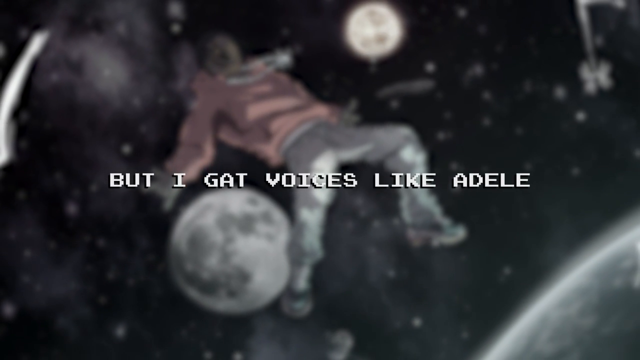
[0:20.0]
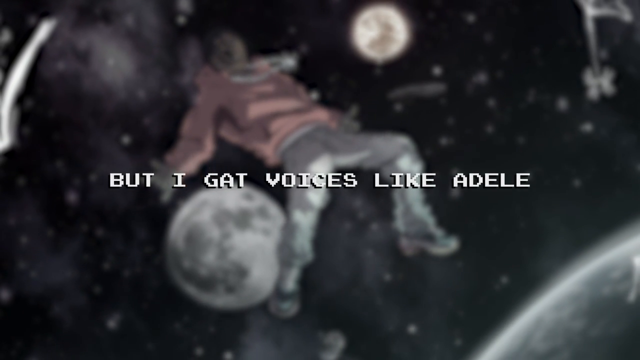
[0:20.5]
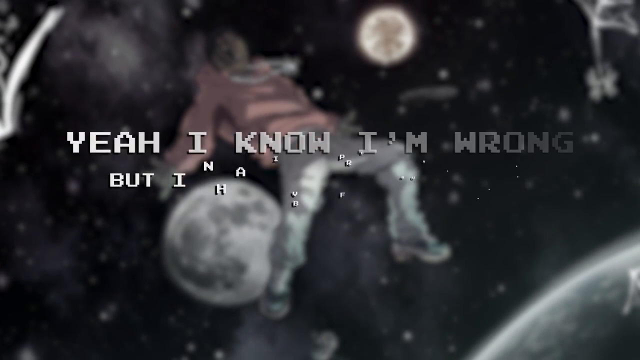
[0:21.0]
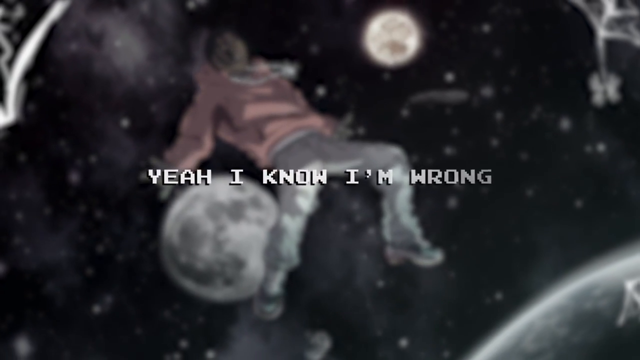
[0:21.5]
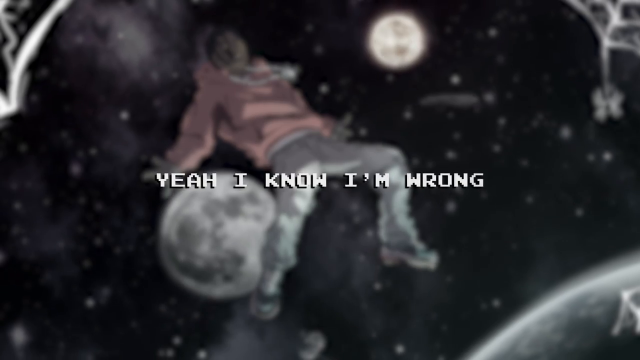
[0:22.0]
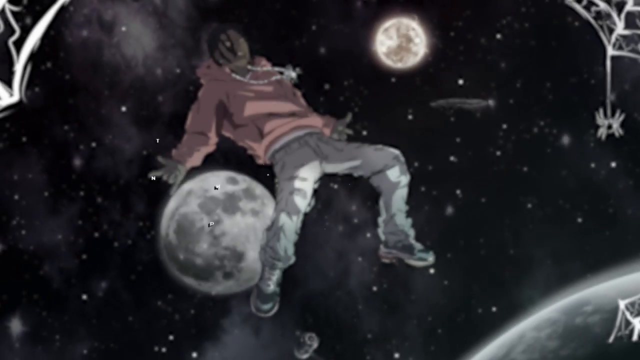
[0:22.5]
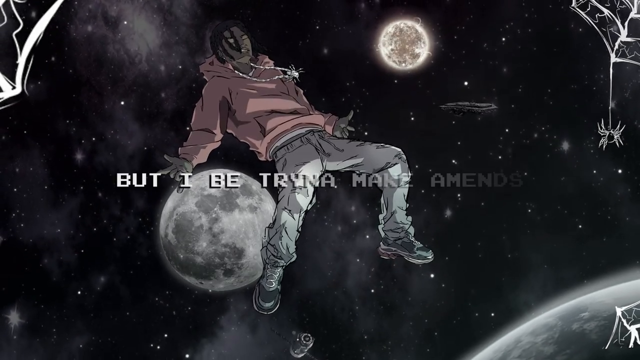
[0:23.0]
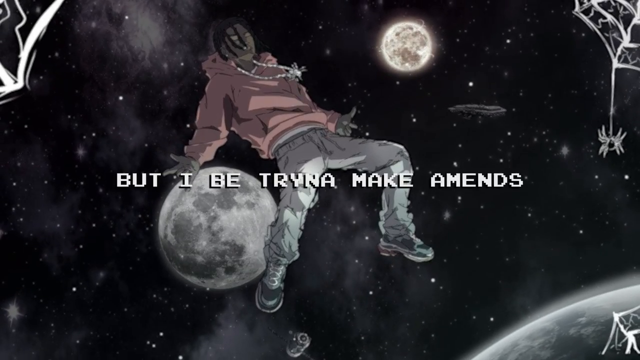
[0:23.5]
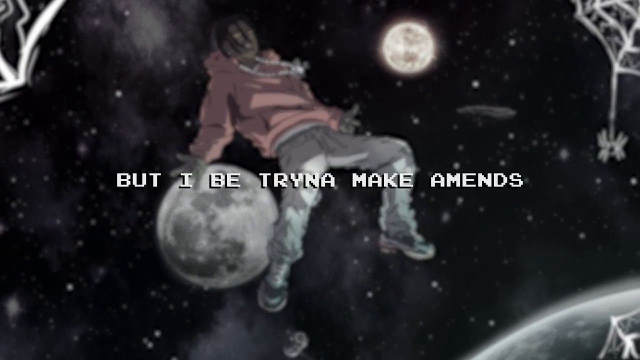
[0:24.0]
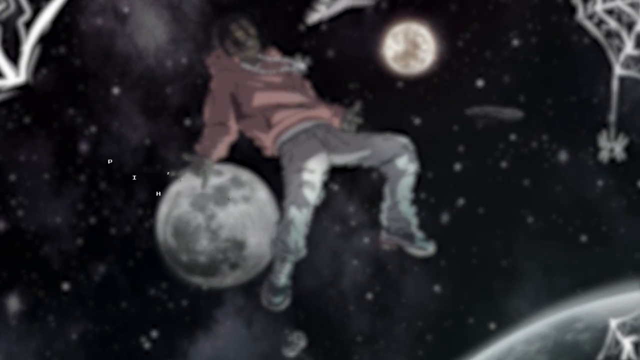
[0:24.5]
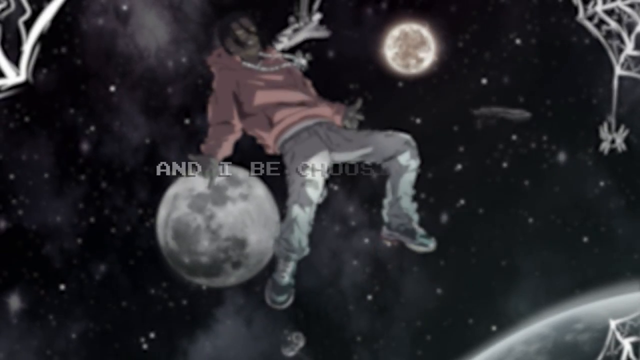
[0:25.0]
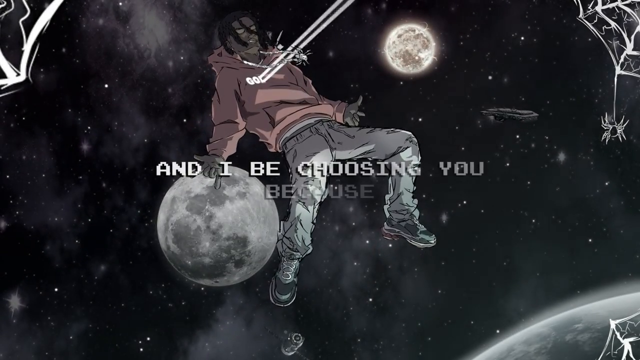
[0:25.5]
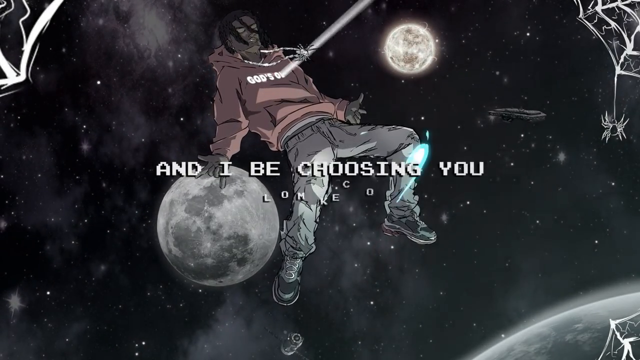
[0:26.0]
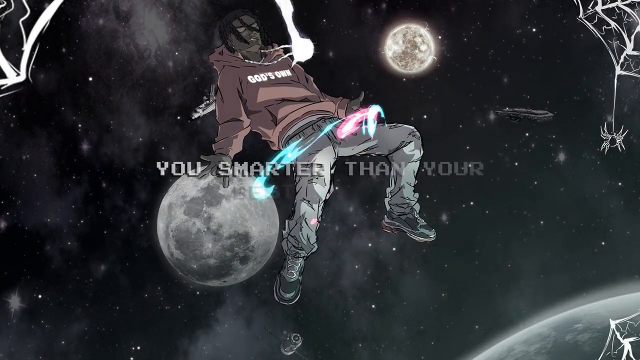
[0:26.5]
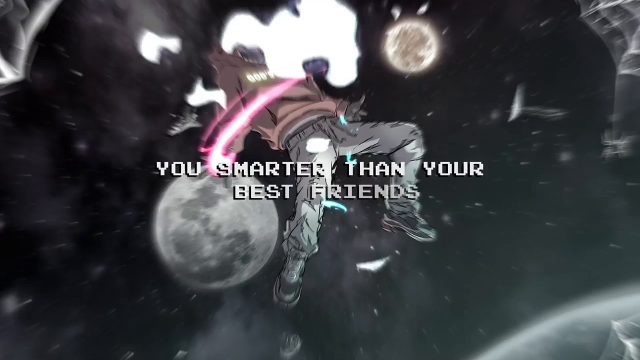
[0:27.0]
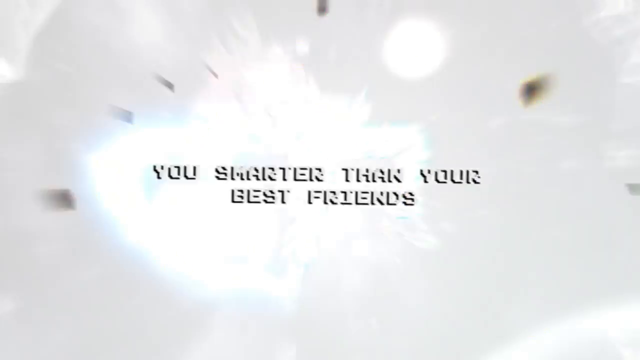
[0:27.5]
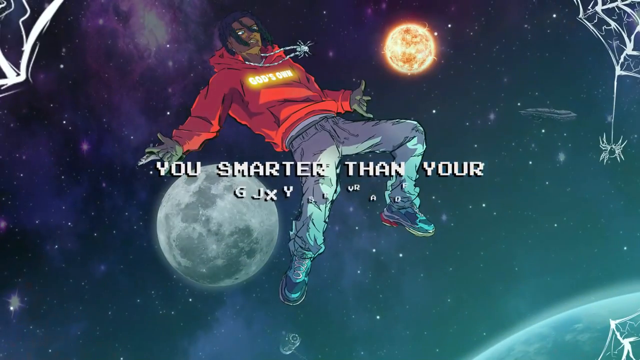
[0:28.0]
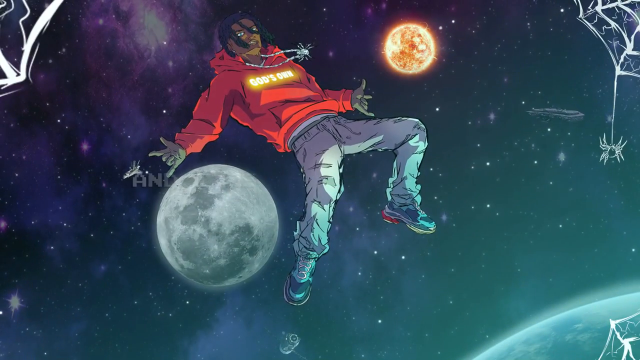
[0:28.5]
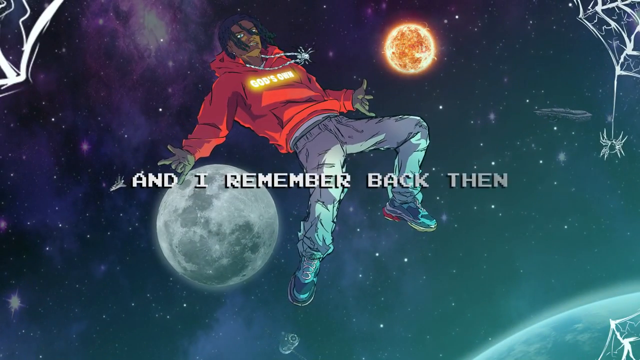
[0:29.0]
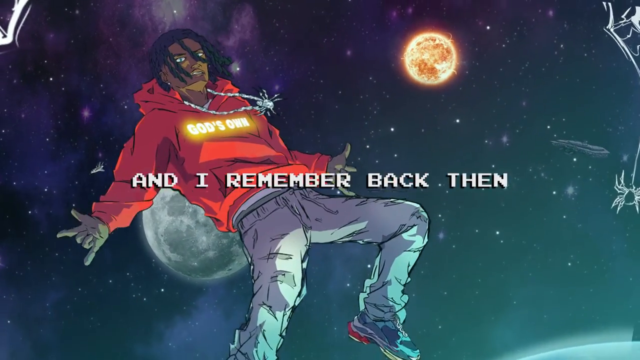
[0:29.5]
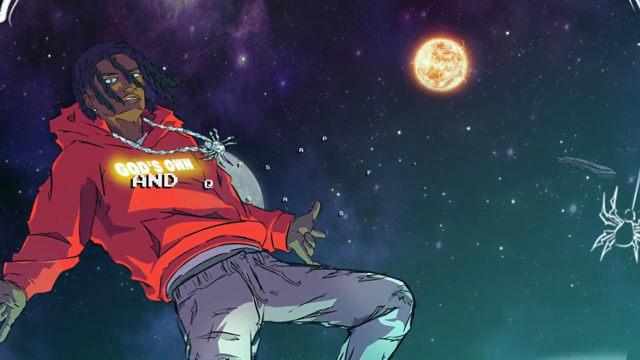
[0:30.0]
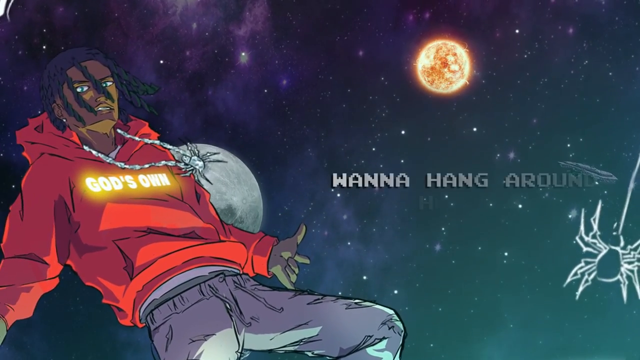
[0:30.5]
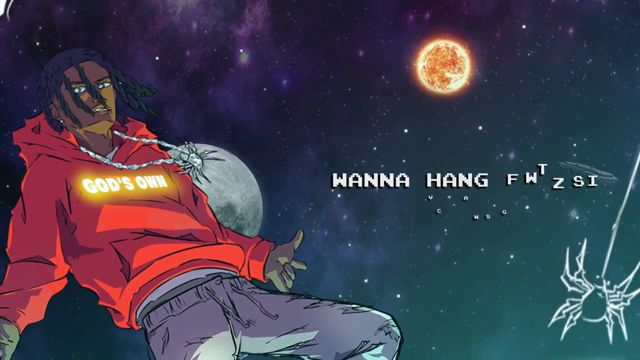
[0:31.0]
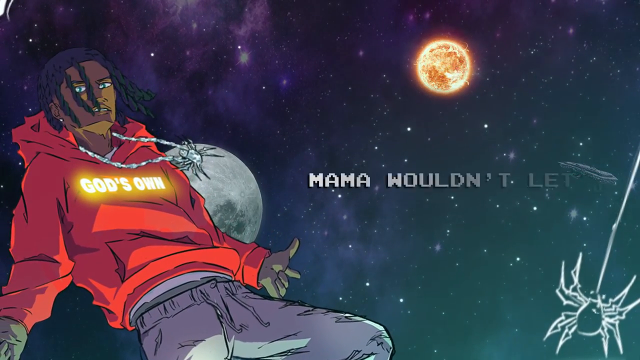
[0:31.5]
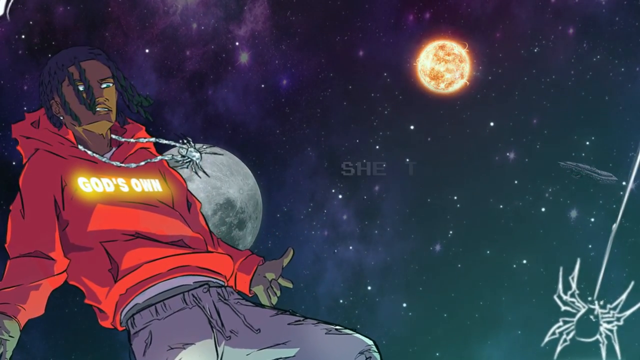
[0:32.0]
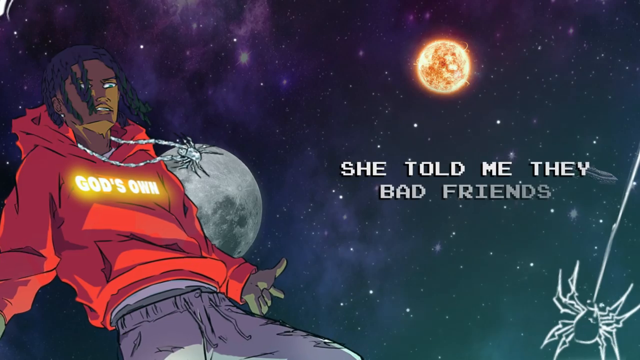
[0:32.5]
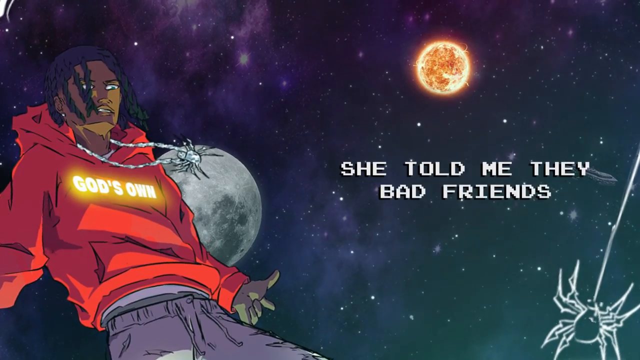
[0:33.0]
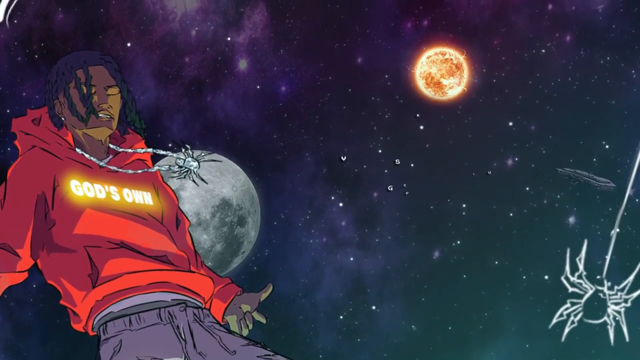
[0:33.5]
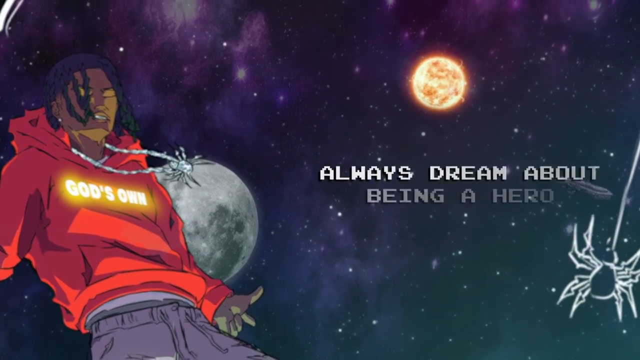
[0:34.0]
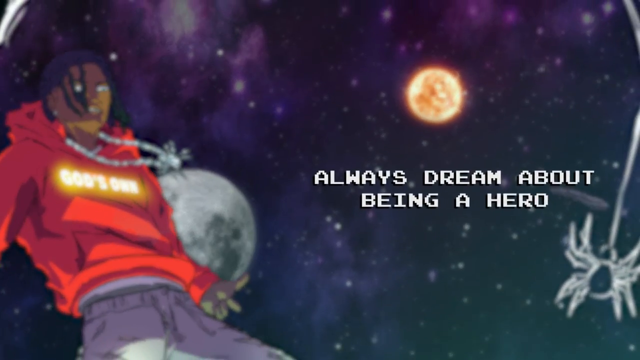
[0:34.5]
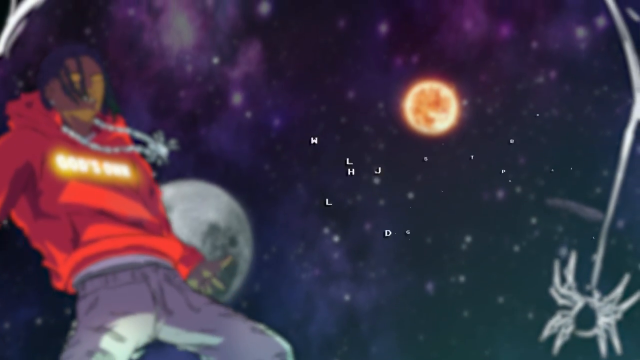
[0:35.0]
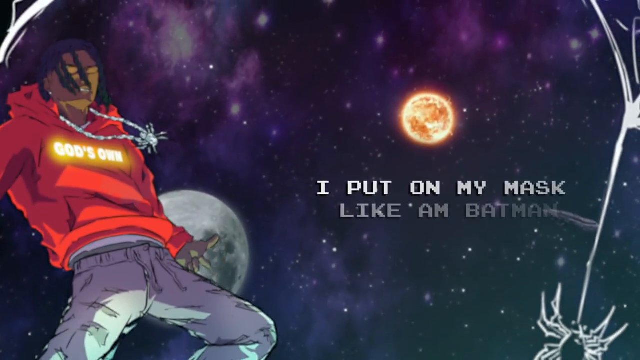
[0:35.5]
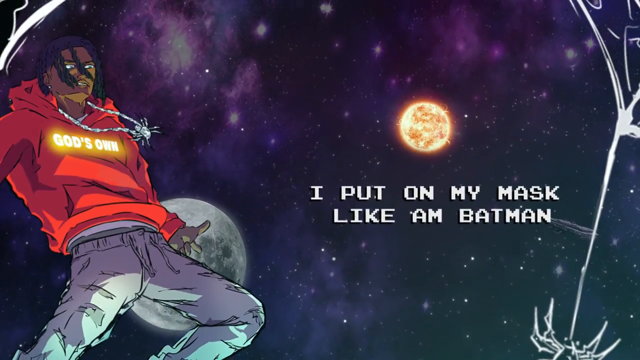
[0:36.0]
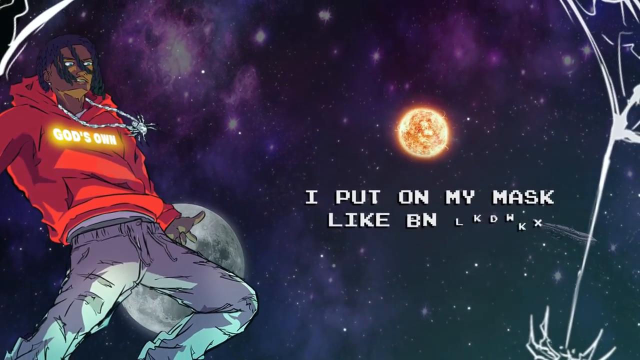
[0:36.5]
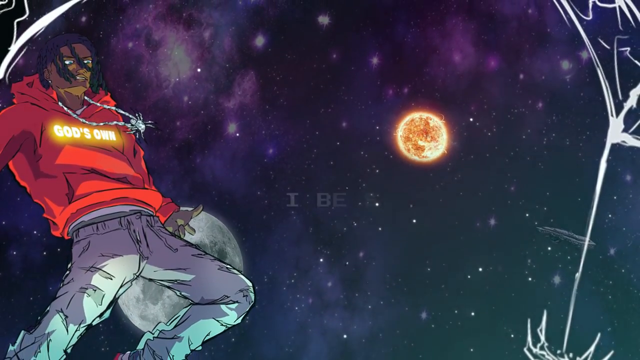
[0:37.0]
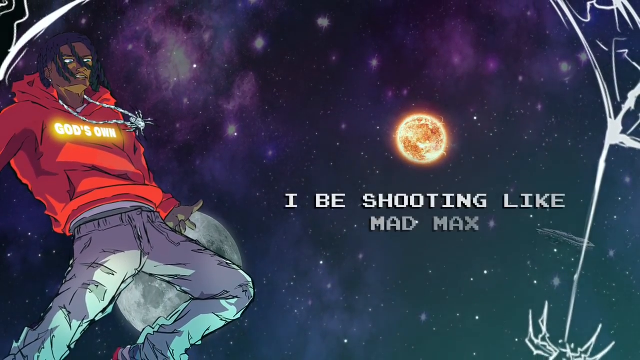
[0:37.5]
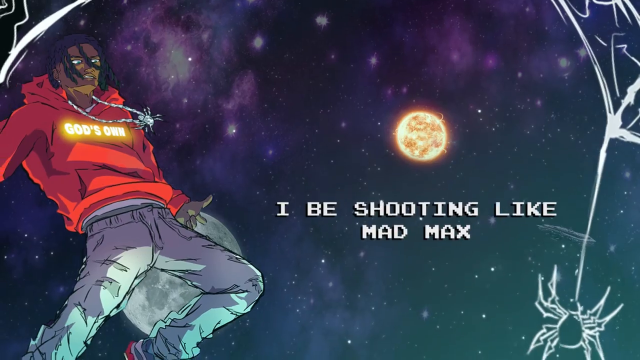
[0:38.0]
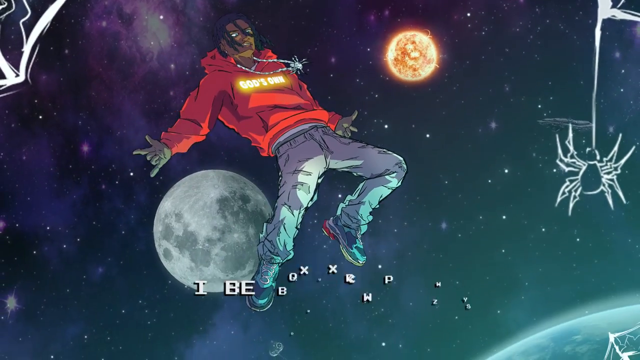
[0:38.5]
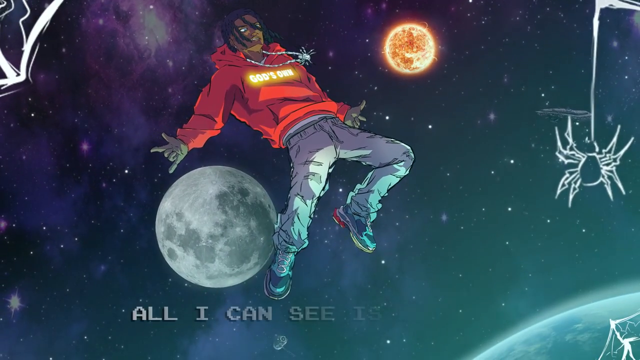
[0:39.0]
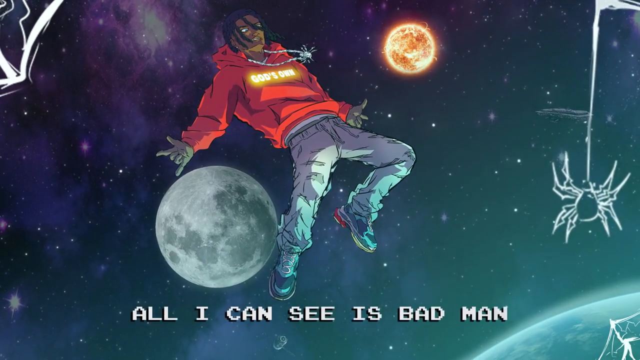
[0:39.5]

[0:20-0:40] Apparently the main character floats through space, with planets in the background floating around behind him. He wears a red hoodie and a long necklace, and a lot of light flies in and around him. The text on his red hoodie says "God's Own," with a glowing effect behind it. Lyrics float around the character. There is a spiderweb in the top right corner and the top left corner, lots of lighting effects, and a spider kind of coming down from the spiderweb. More lyrics float around the character and the other elements, reading "Yeah, I know I'm wrong, but I'd be trying to."